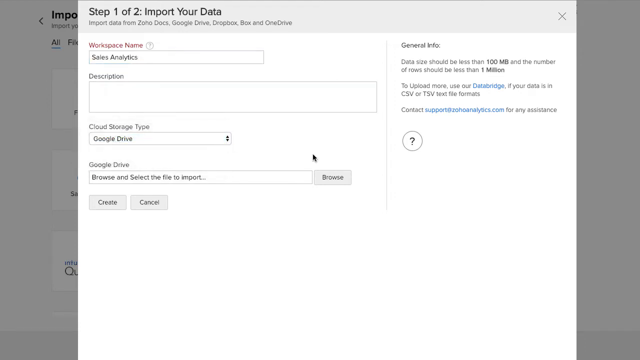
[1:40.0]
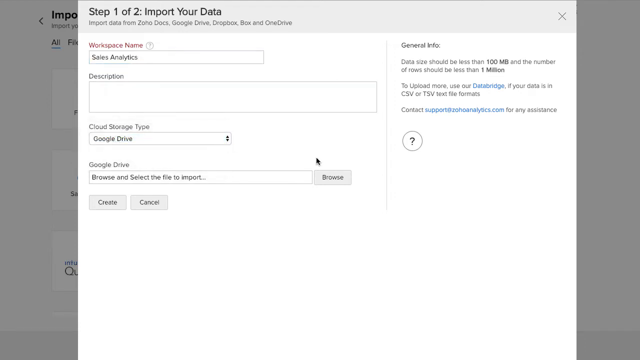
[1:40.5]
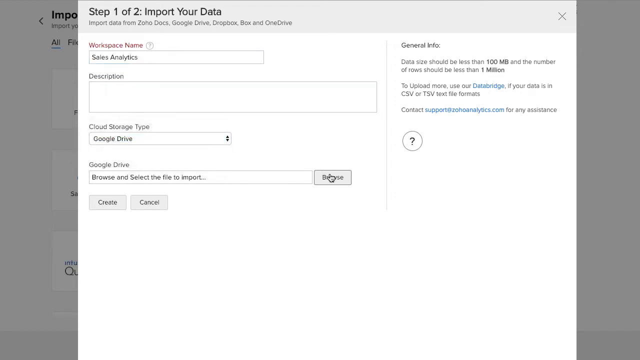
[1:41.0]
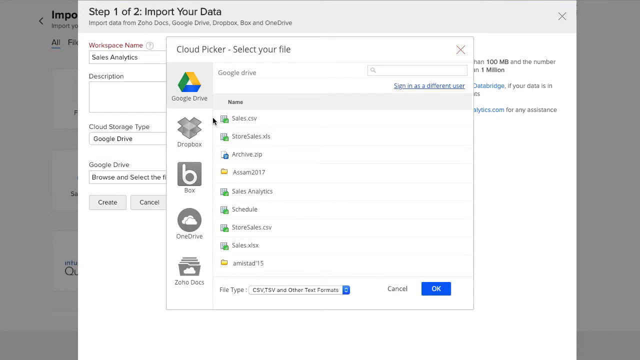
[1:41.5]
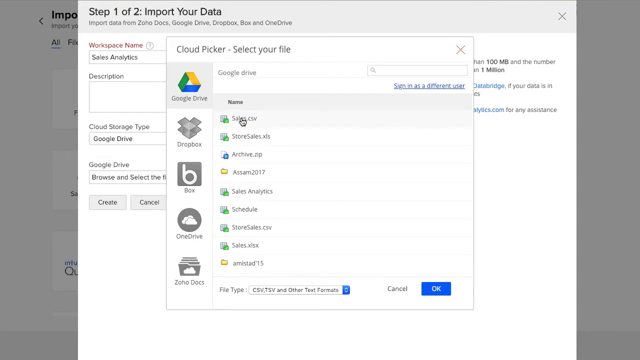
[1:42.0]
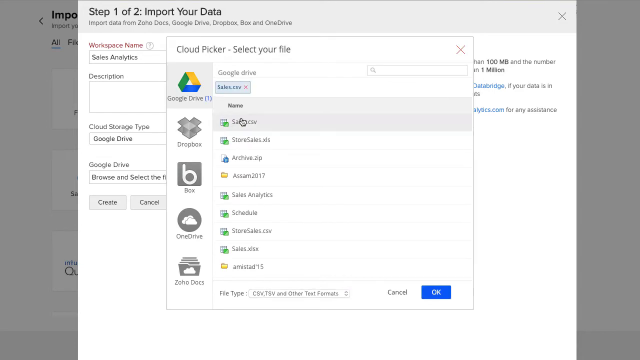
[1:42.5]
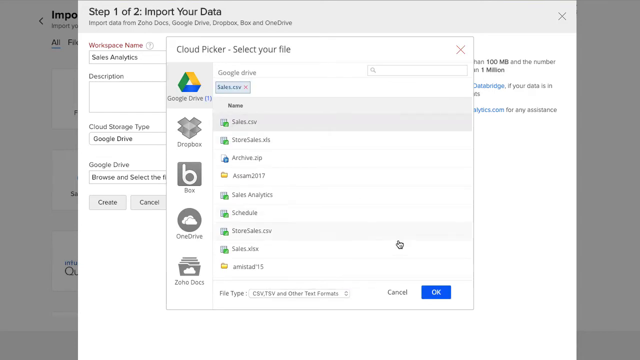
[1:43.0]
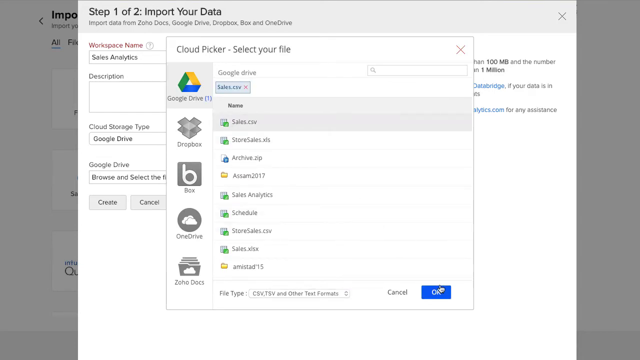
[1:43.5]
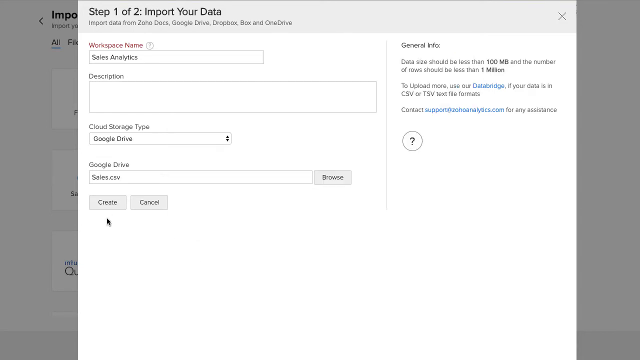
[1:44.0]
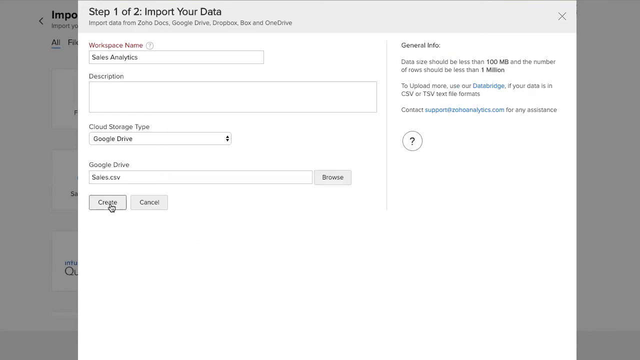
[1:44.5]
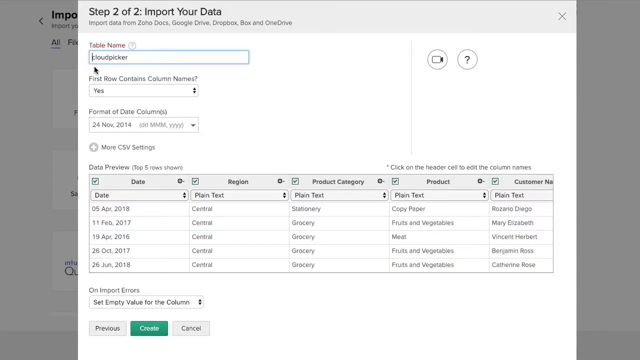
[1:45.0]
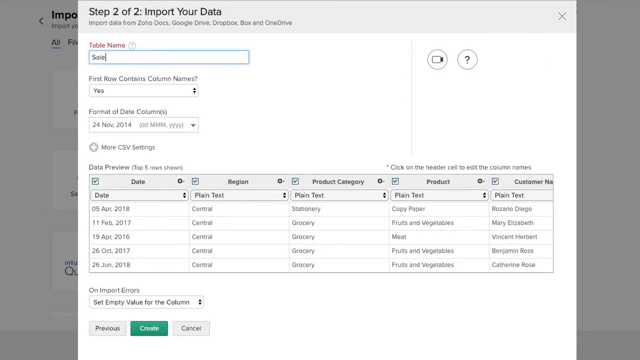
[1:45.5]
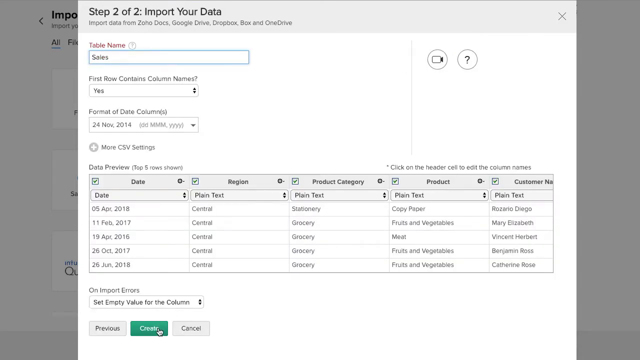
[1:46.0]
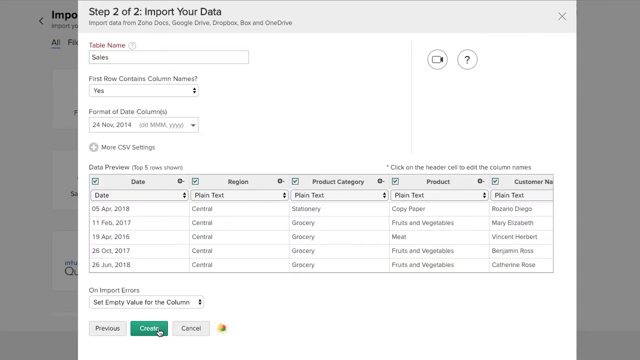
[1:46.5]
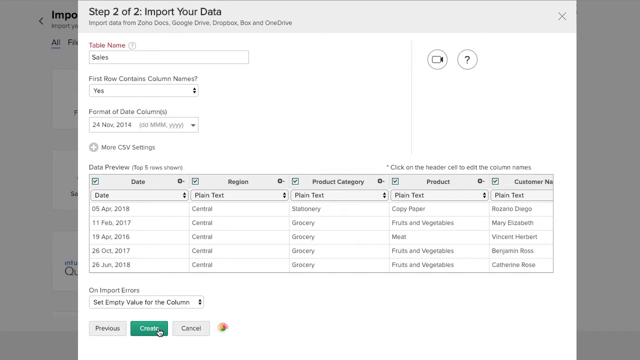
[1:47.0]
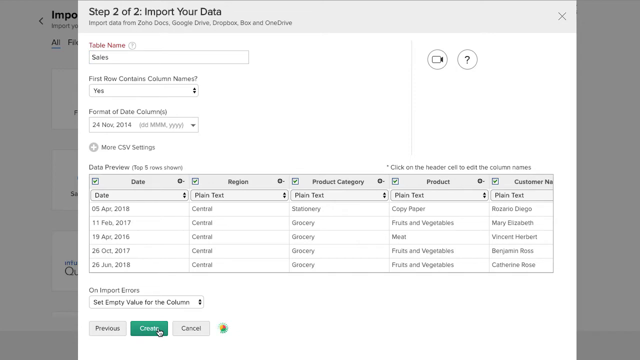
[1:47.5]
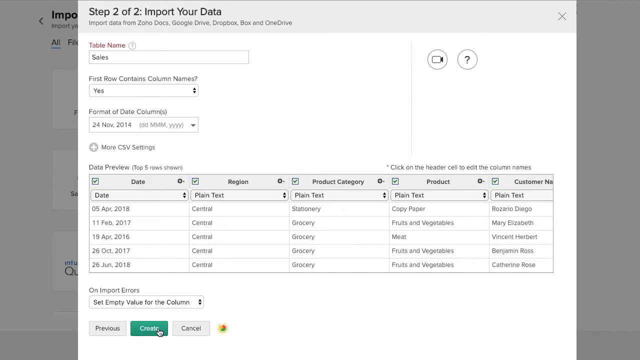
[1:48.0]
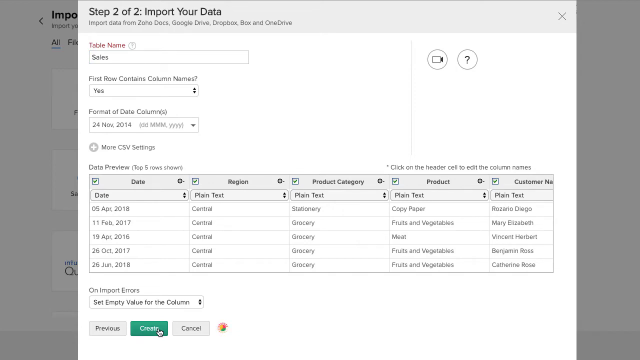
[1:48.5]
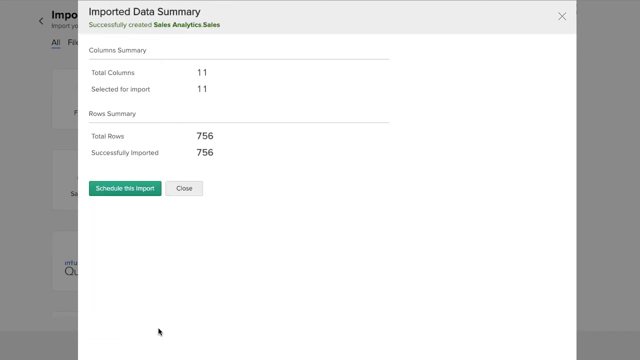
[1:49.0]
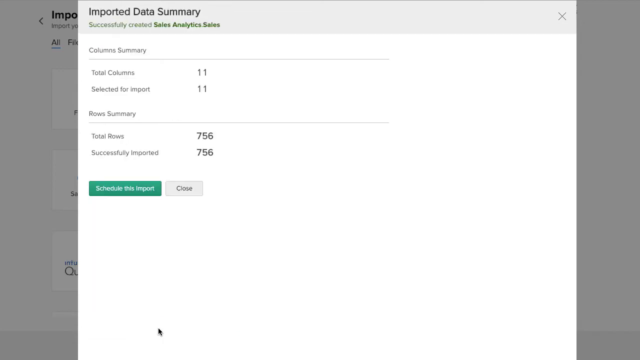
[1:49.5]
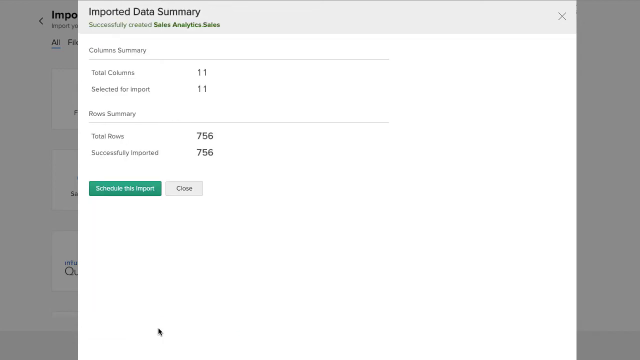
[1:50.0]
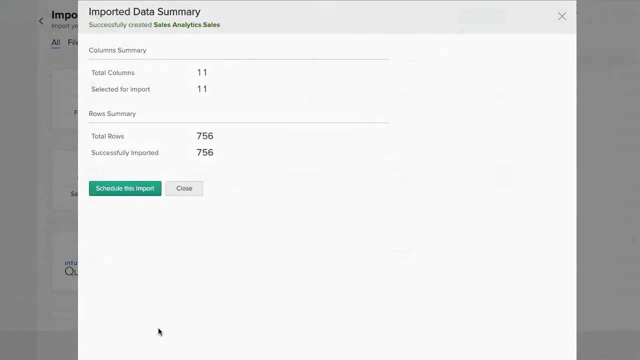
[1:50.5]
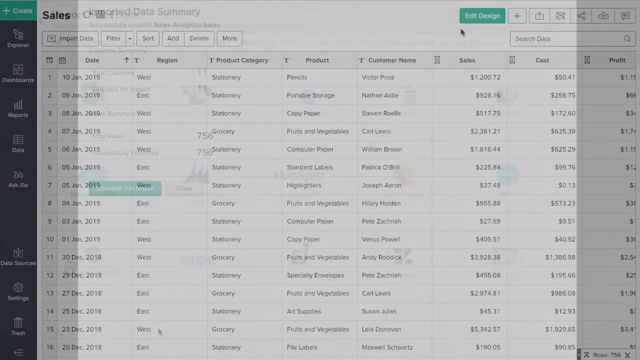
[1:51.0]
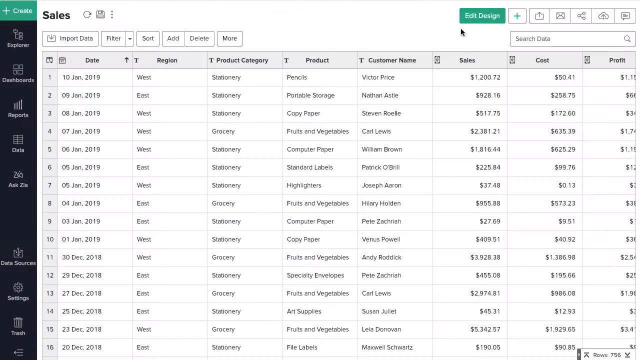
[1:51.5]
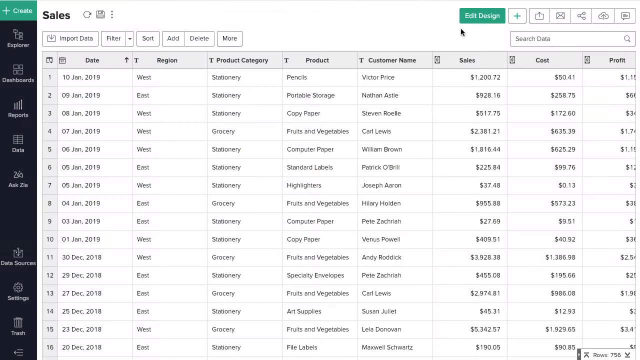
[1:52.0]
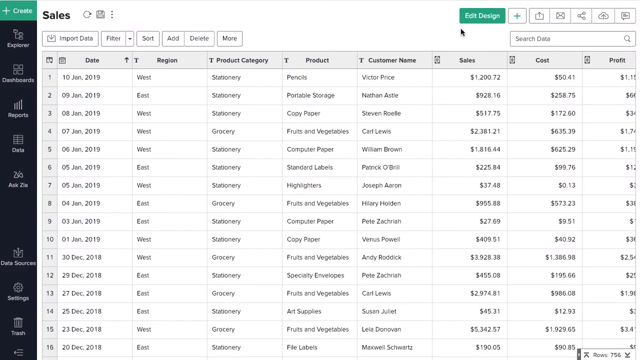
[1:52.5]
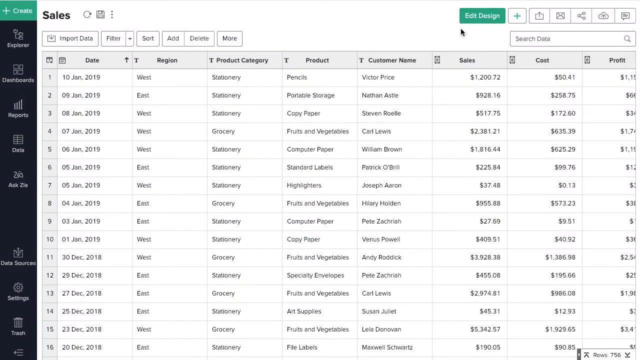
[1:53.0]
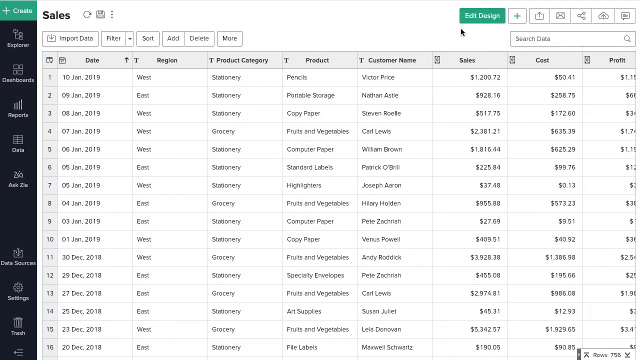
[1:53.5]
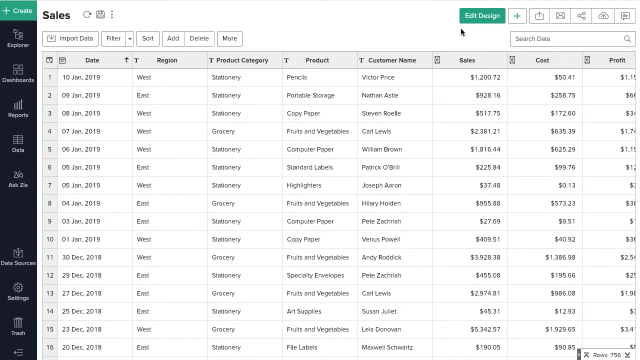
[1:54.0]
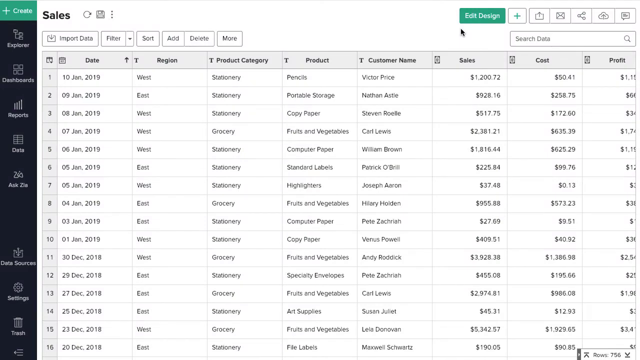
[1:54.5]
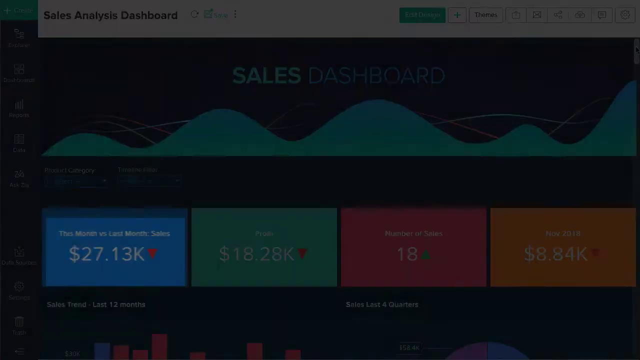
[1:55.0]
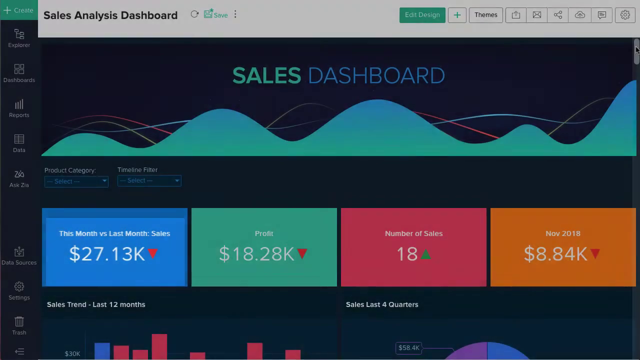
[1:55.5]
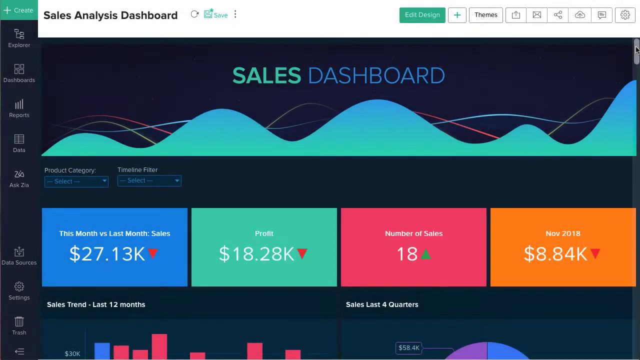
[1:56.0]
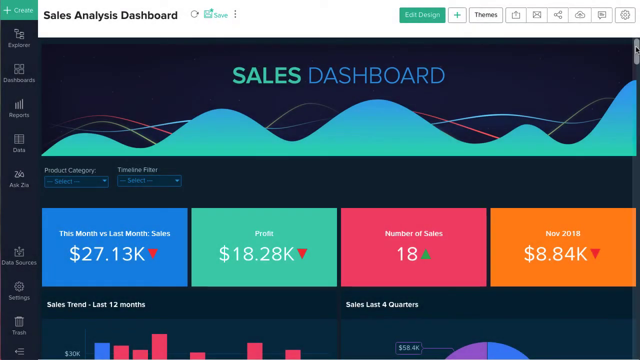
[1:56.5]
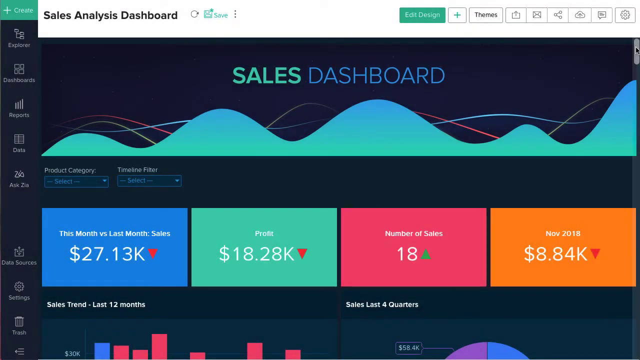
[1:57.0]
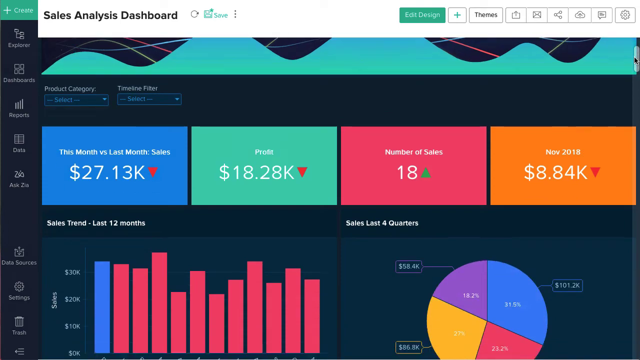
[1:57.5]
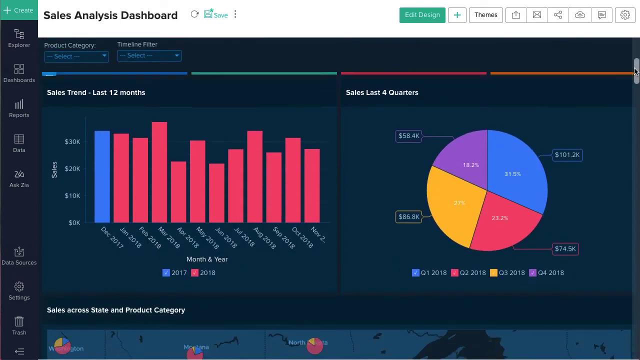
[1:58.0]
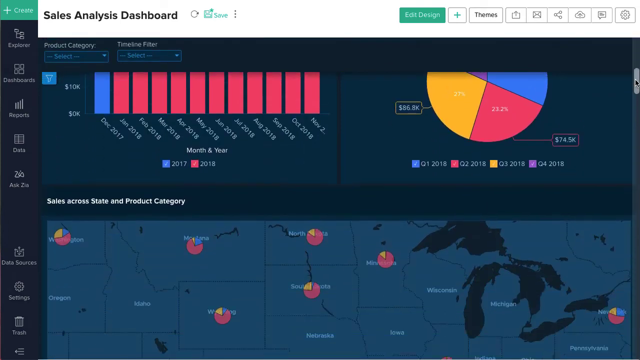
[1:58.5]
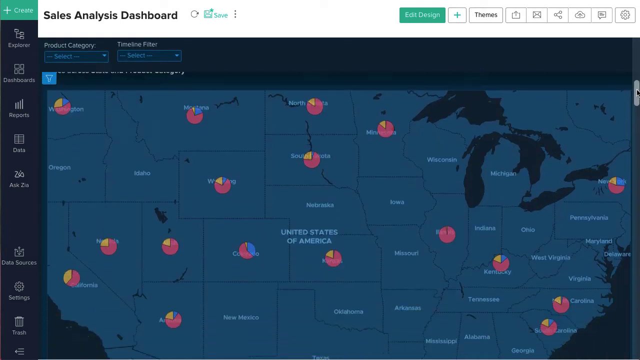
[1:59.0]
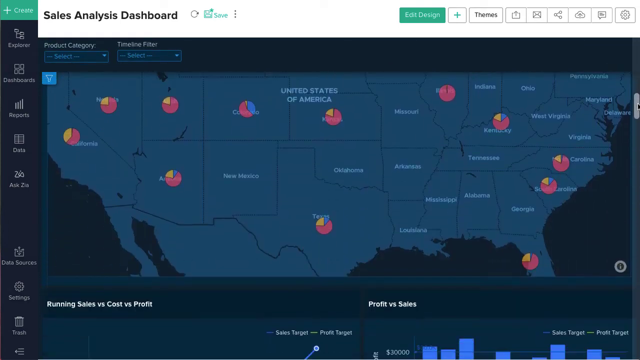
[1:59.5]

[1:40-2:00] A screen reads "import your data" at the top, with boxes for workspace name, description, and cloud storage type, set to Google Drive. The person clicks a button, and a screen appears that says "cloud picker, select your file", showing a list of files. On the left is a list of sources to choose from: Google Drive, Dropbox, Box, OneDrive and Zoho Docs, each with a logo and text; only the Google Drive logo is in color, and the rest are black and white. The cursor hovers over sales and clicks it, then the person clicks OK and another button, and a large amount of data appears under "data preview", with dates, text and other information. The person changes the table name to sales and clicks a button that says "create". The full table appears with the title "sales" at the top in black, listing dates, regions, product categories, products, customer names, sales, cost and profit for dozens of items. A search bar and some icons are in the top right corner. The page then changes to one reading "sales analysis dashboard" at the top in black, with sales information; scrolling down reveals a map of the United States and colorful graphs.